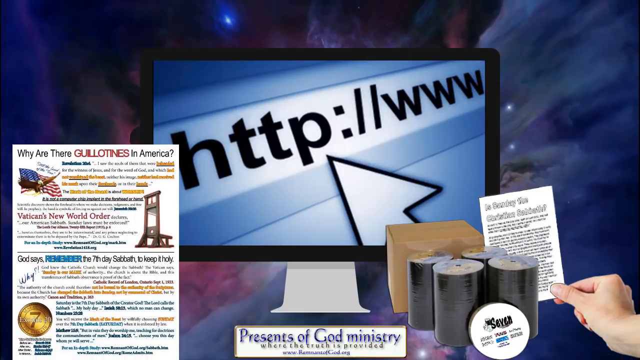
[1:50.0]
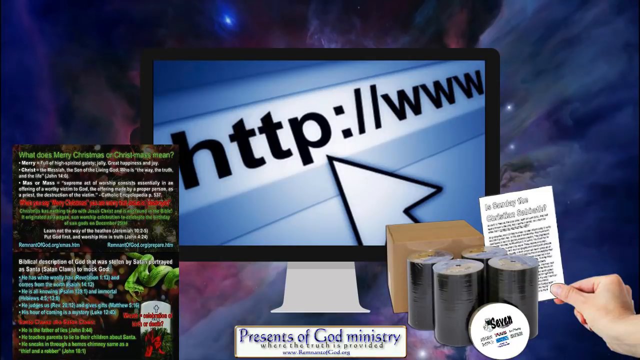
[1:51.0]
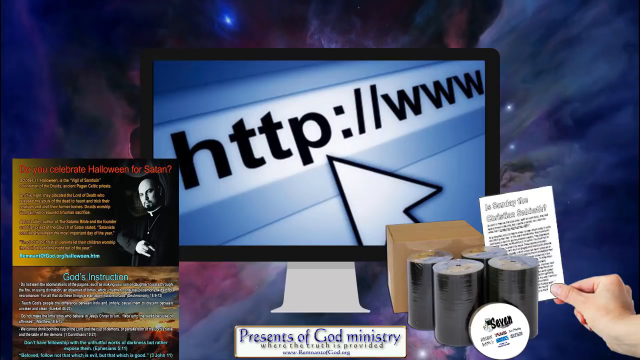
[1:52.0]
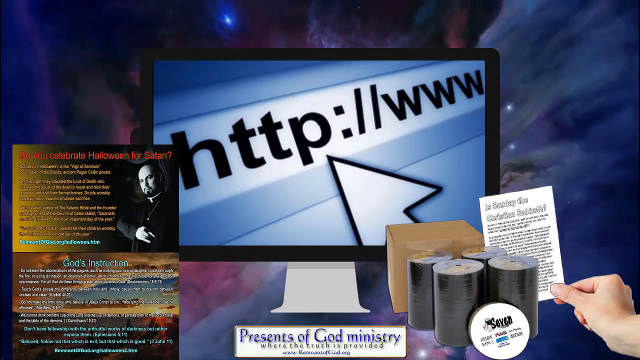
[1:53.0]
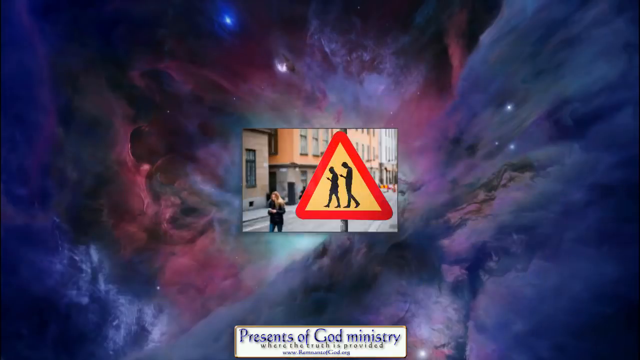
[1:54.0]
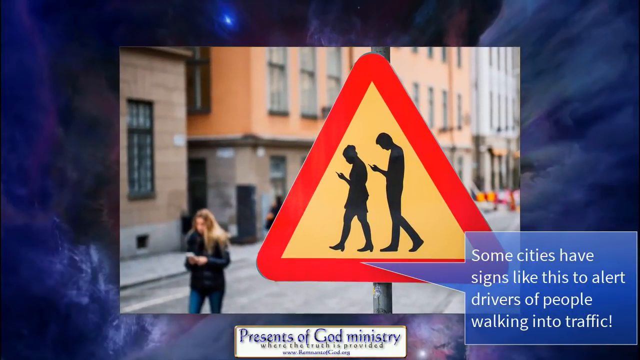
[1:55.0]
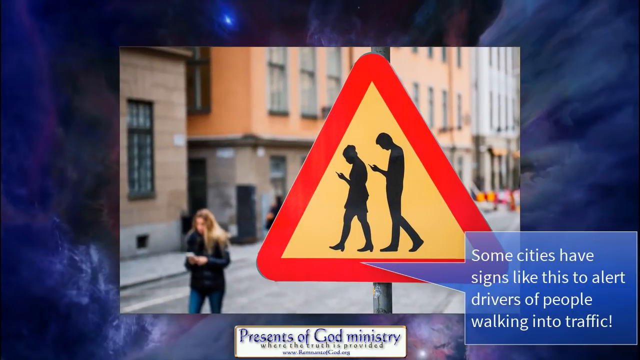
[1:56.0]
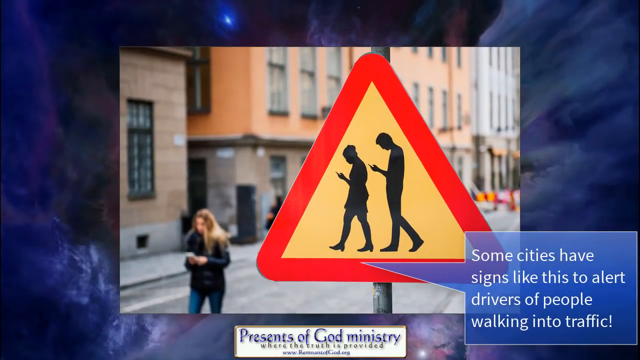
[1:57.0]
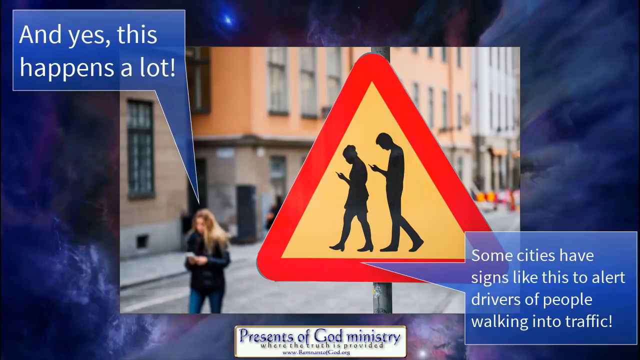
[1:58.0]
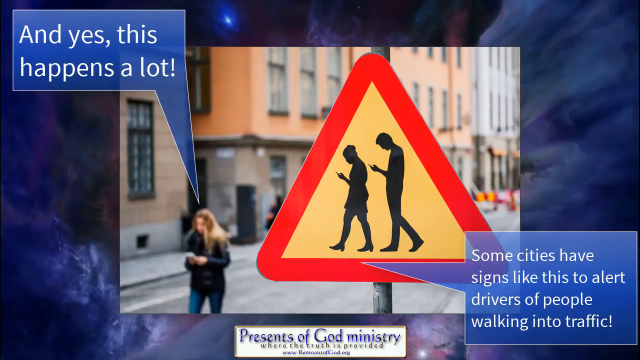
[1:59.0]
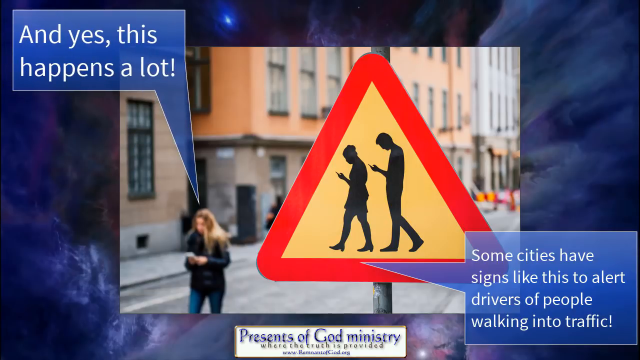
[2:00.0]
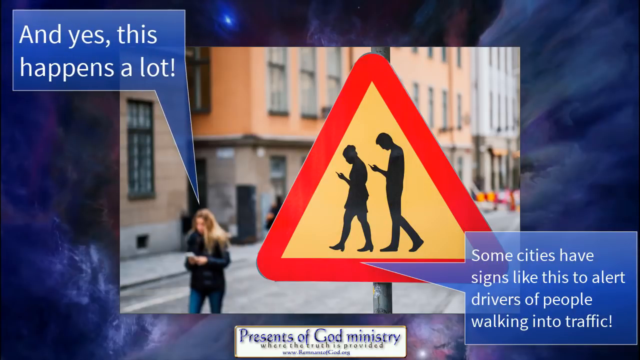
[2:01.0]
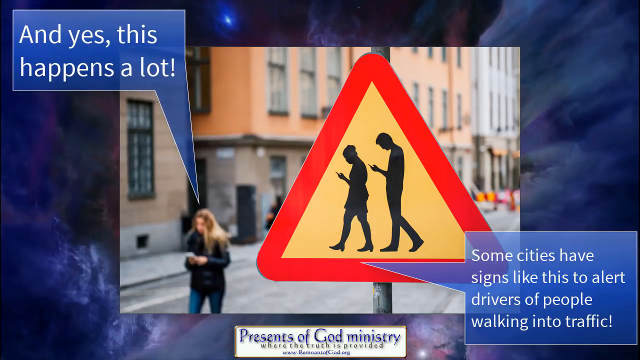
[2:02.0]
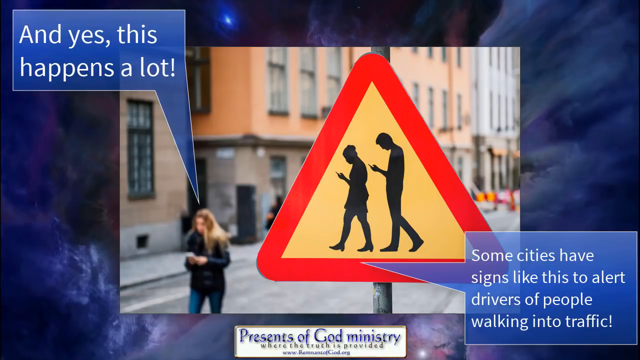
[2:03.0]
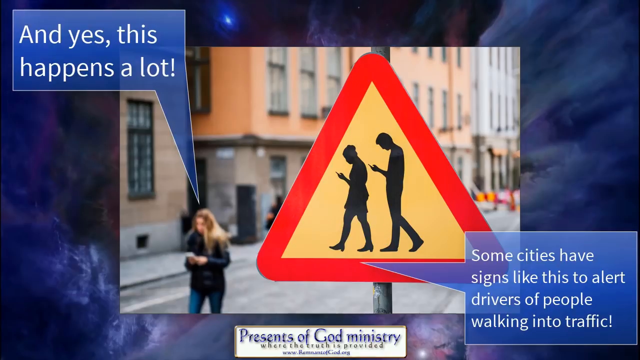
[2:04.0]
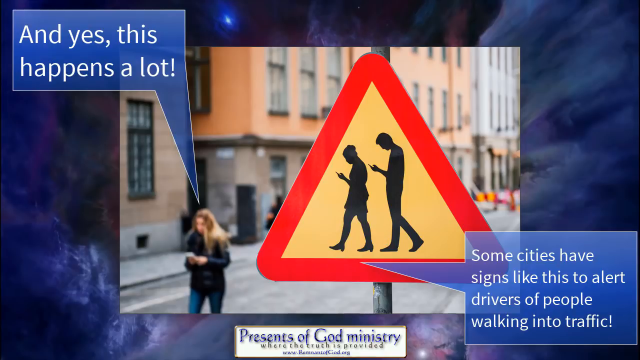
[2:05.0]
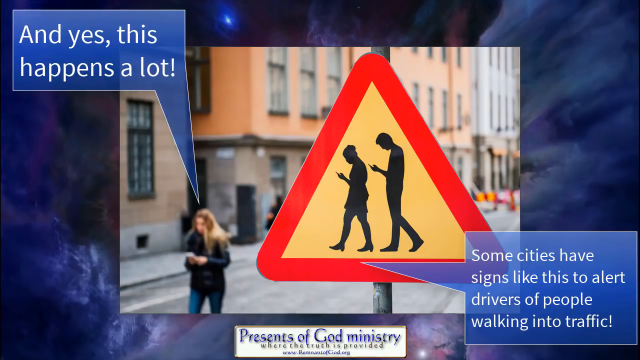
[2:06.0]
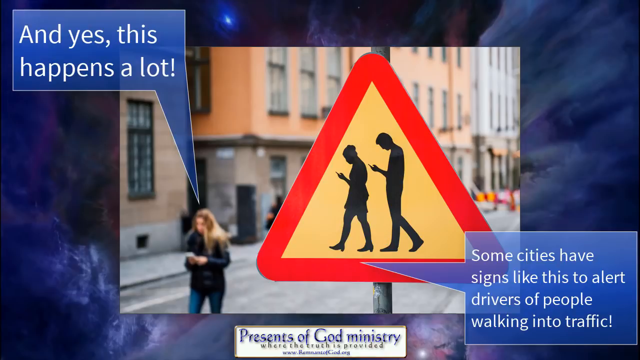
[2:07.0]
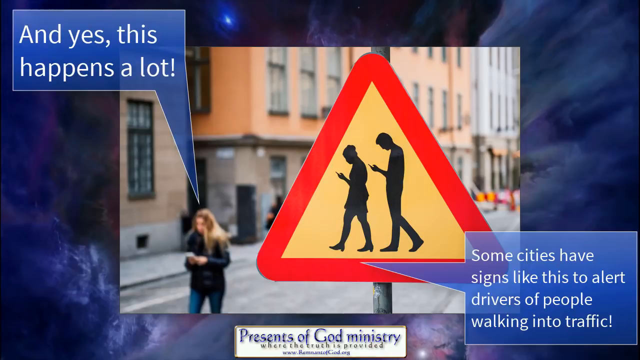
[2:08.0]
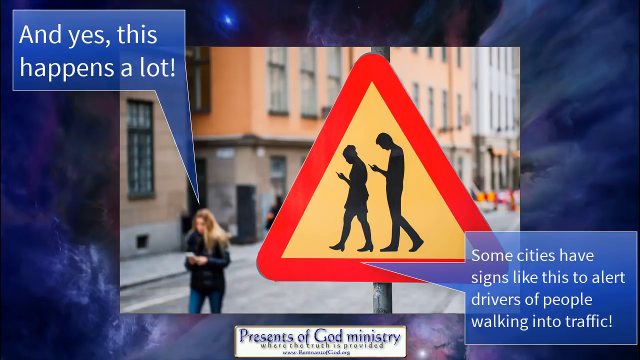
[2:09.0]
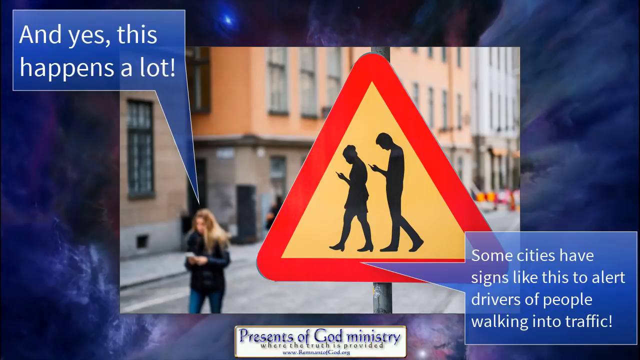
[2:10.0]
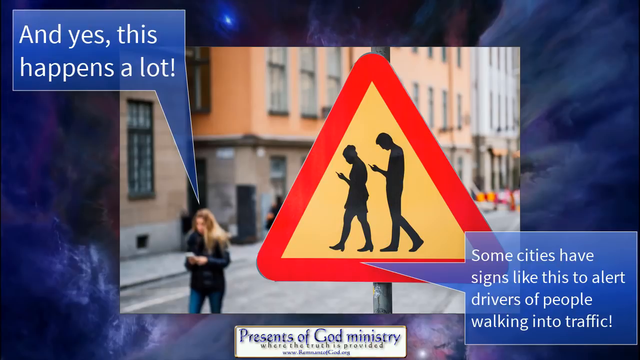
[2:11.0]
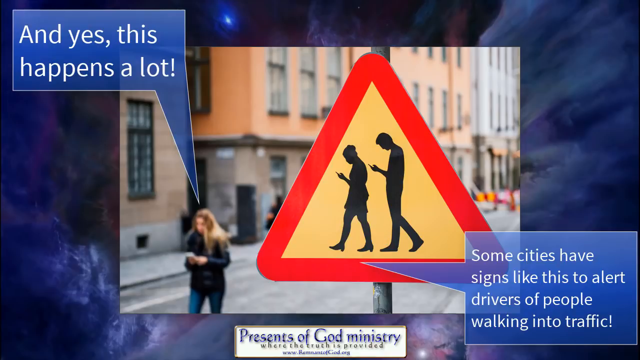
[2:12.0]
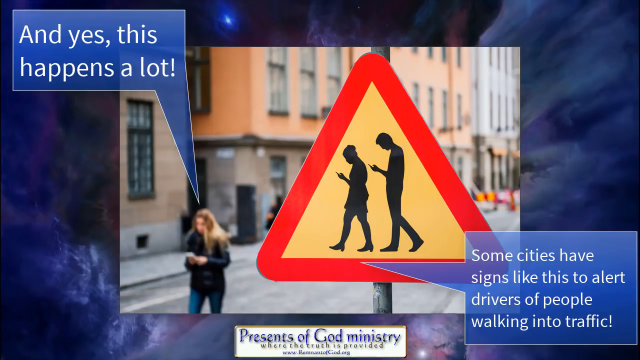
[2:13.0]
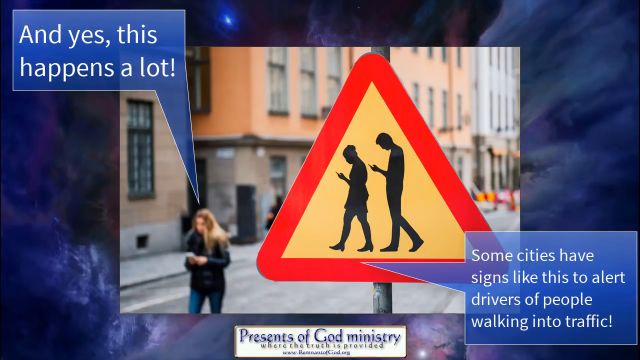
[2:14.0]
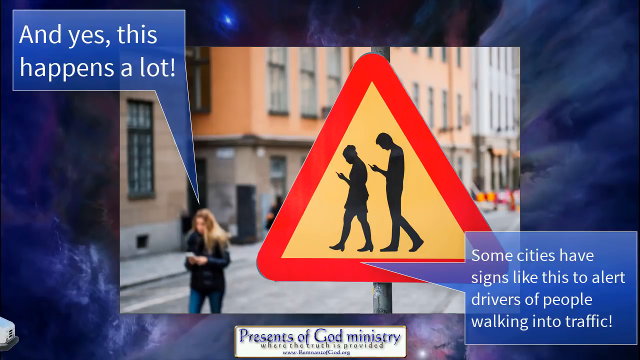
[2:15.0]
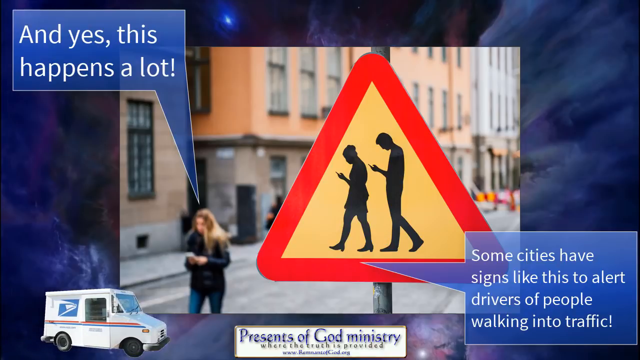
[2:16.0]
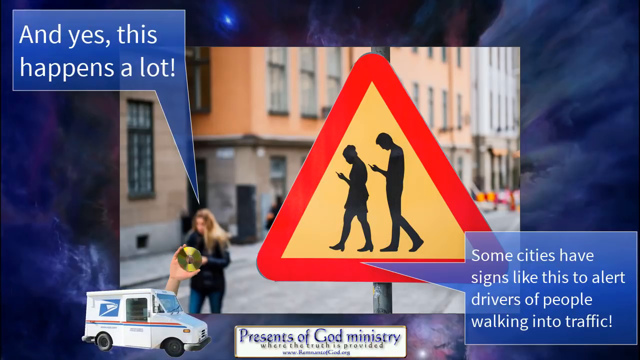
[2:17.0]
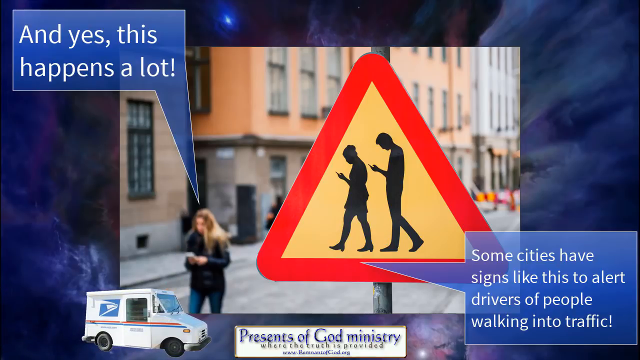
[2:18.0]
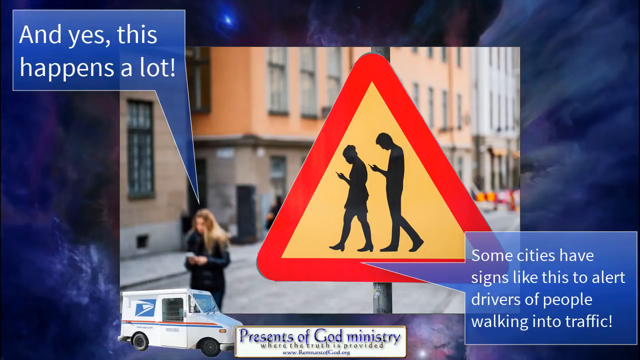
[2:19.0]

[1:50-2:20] In the lower left corner, website articles keep popping up, about three or four more times. Then the items on the screen move off to the side and beneath, and for a split second only the space background is visible. It transitions to a photograph front and center of a woman walking down the street; she appears to have long black hair, wears a black jacket and looks at her smartphone. To her right is a big sign: a yellow triangle with a red border showing a female and a male silhouette looking down at their phones. To the right, a blue pop-out says "some cities have signs like this to alert drivers of people walking into traffic". A second or two later, another pop-up in the upper left corner, pointing down toward the young woman, states "and yes, this happens a lot", almost as if she is thinking or saying it. Probably about five seconds later, a white postal truck comes from the left corner of the screen to where the woman is walking, probably a third of the way into the photograph. The truck moves rather slowly and stops right before it would hit her. What looks like a hand comes out of it, holding what looks almost like a CD-ROM. Then the truck continues on.